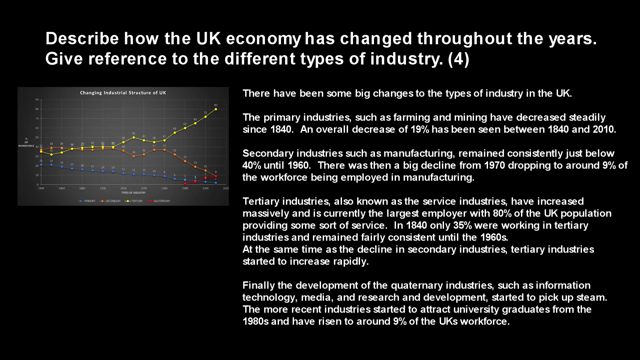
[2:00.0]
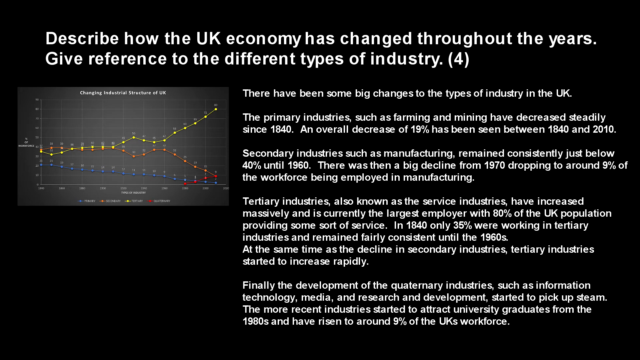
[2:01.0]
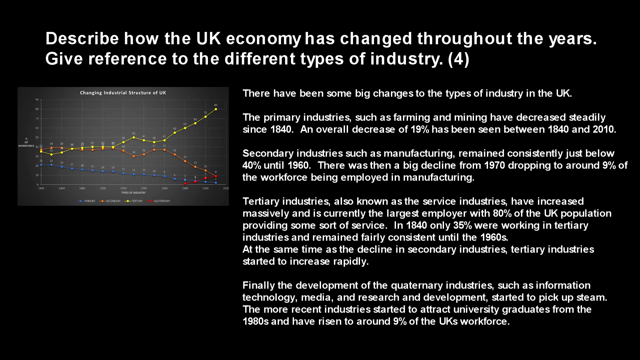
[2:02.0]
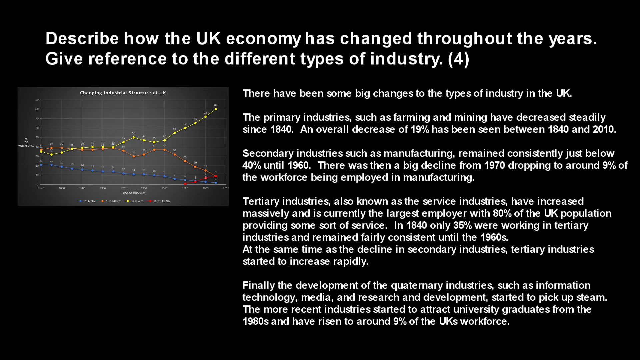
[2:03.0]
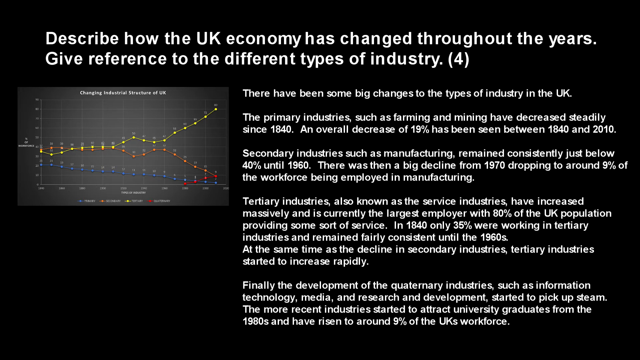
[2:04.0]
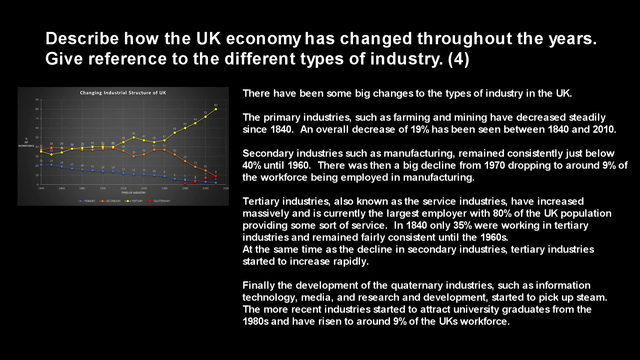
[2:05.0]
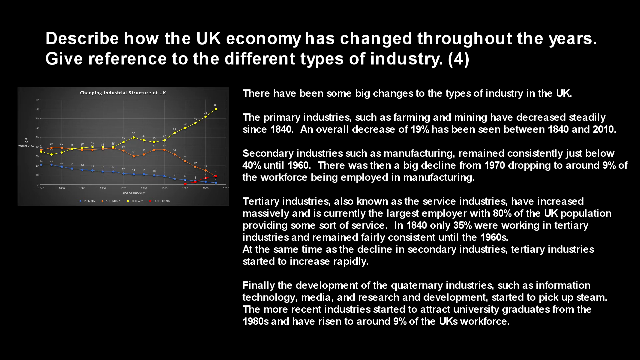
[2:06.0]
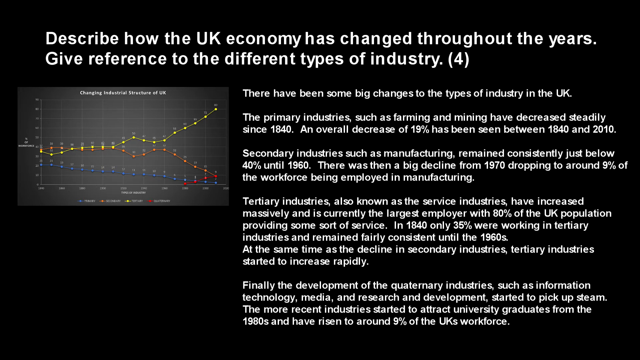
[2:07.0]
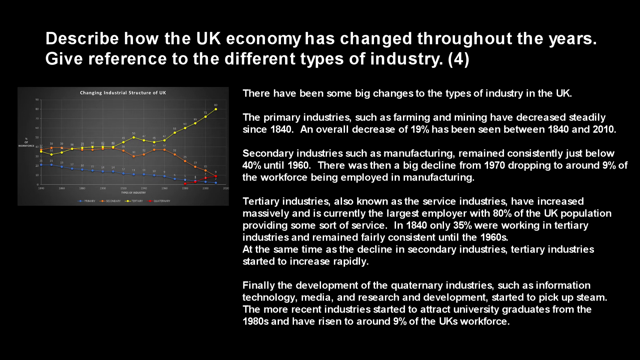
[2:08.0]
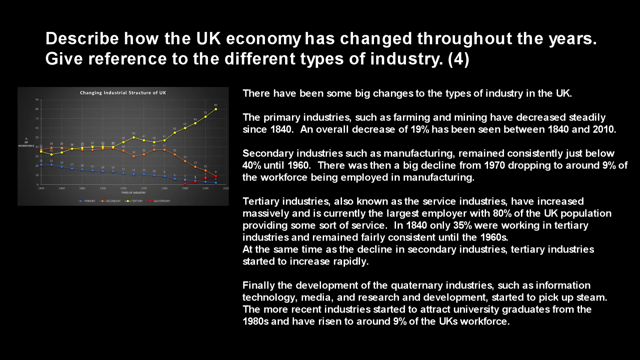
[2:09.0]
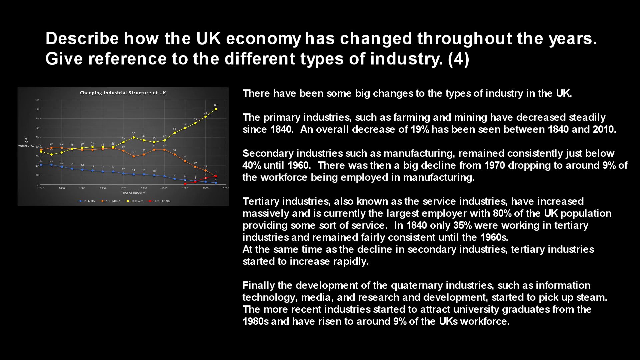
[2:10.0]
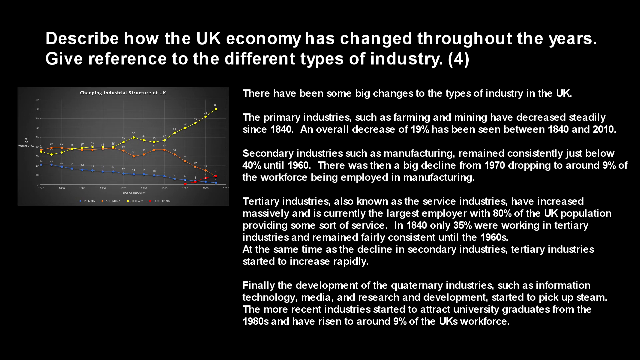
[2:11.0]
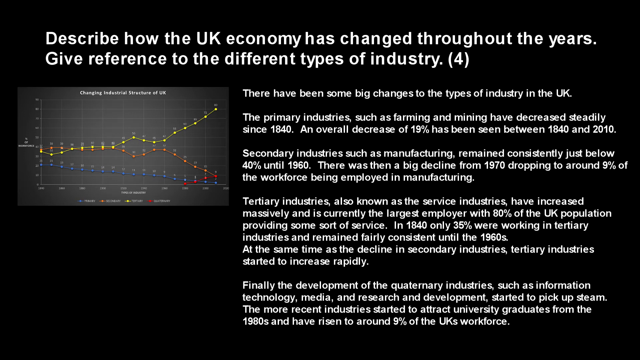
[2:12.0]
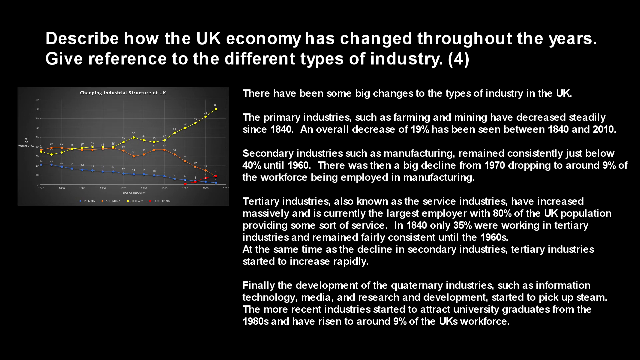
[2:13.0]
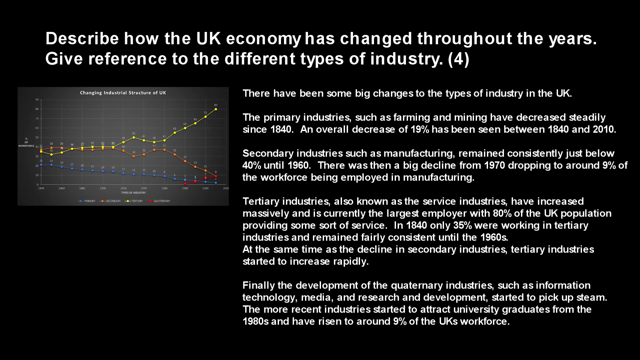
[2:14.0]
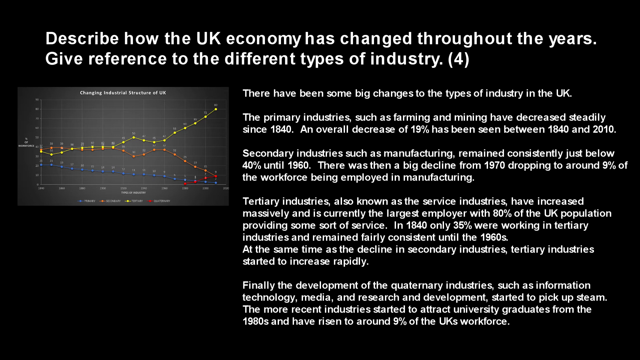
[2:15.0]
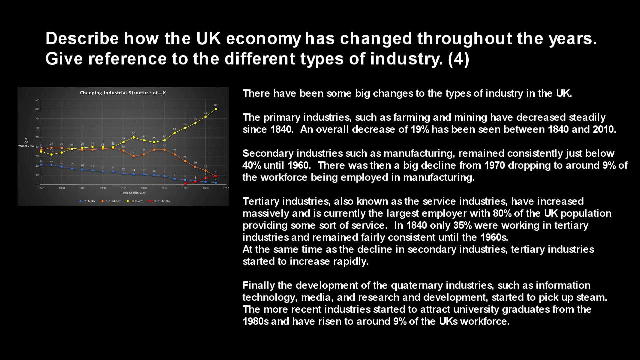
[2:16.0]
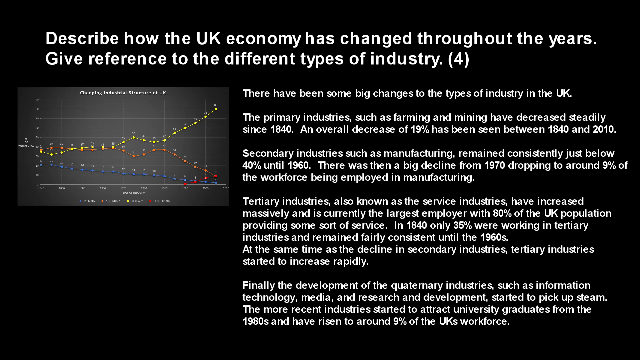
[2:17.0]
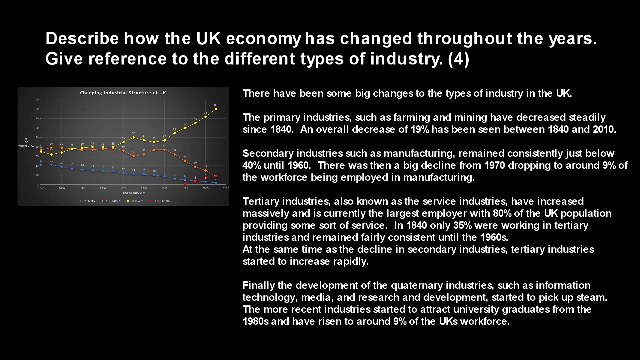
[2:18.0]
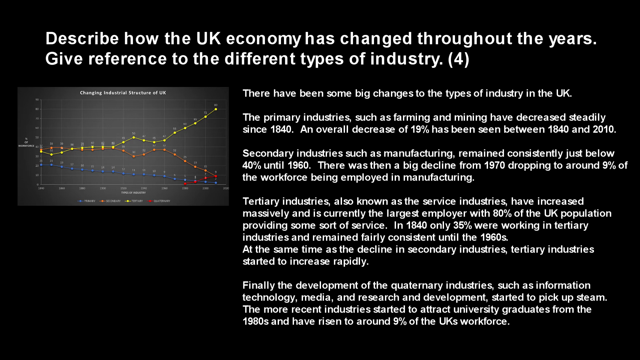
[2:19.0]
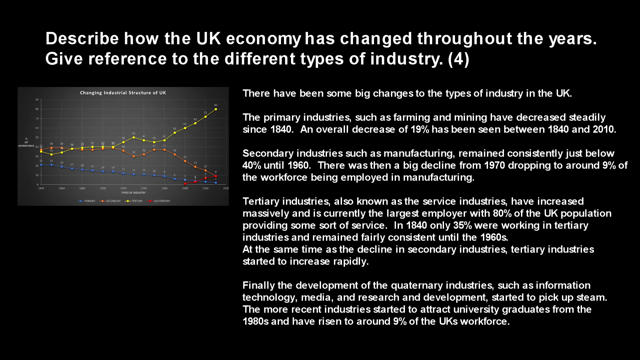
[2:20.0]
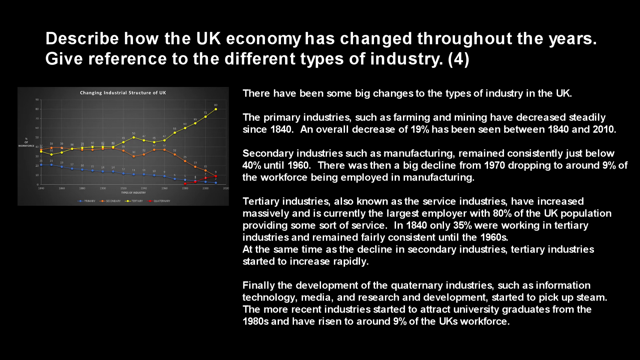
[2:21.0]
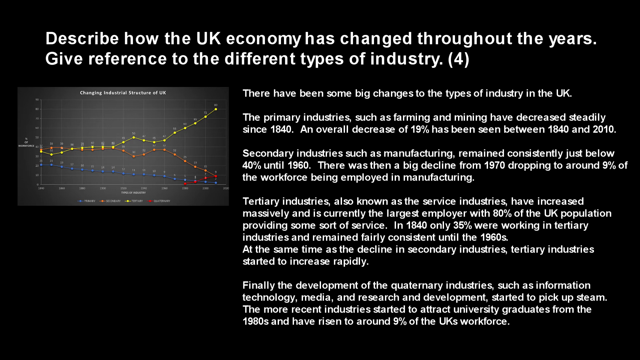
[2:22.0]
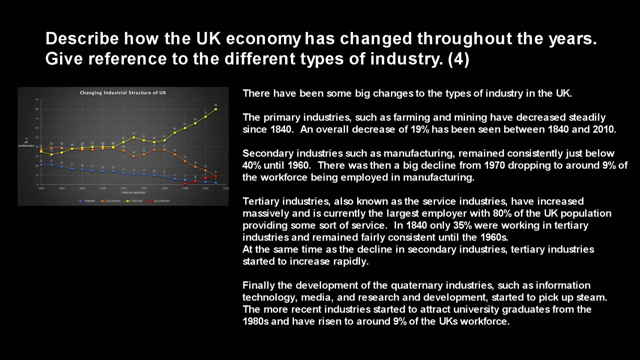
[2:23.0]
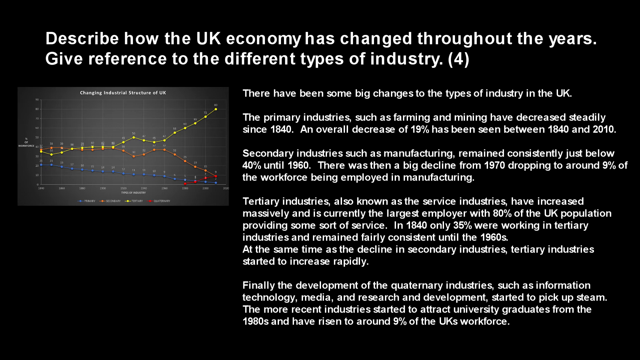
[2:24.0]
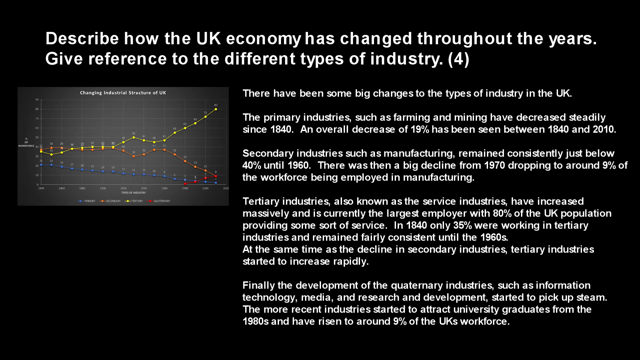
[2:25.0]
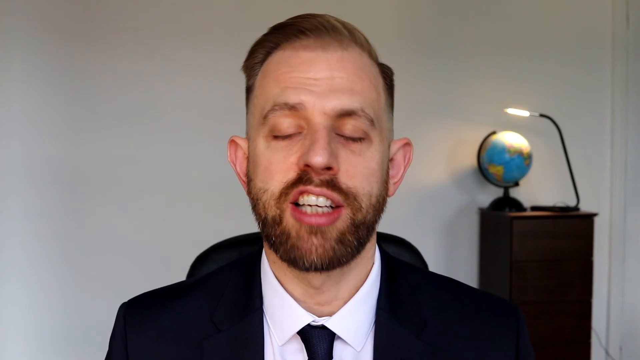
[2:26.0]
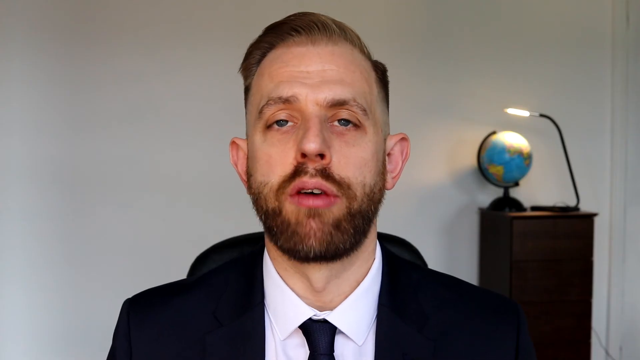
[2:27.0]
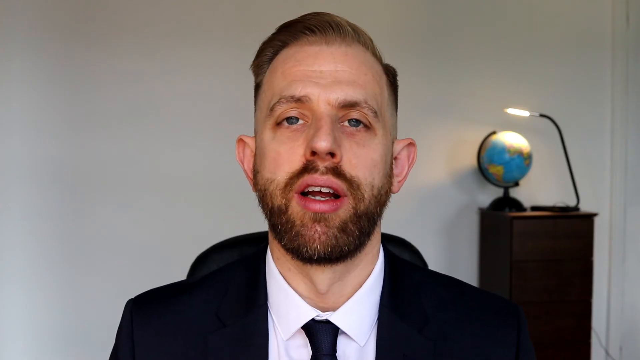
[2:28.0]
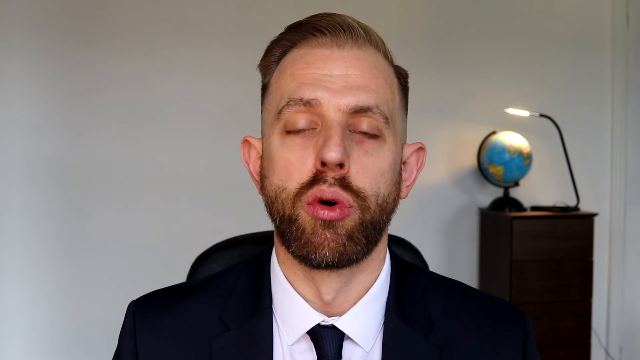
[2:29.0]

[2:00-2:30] The graph shows the fluctuating gross domestic product of industries in the UK economy. The industry indicated by the yellow line rises throughout the year, the one in red dots drops throughout the year, and another one is not rising.